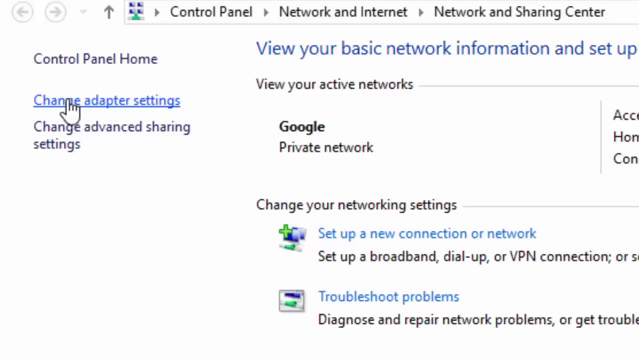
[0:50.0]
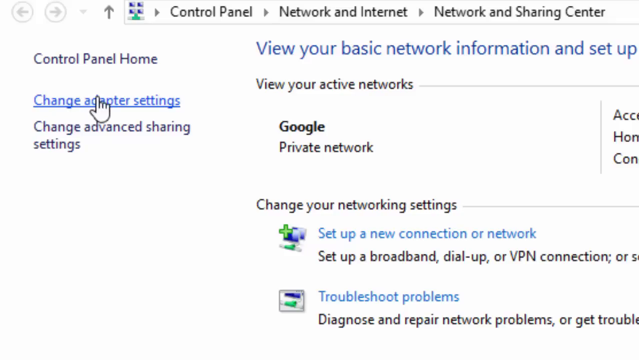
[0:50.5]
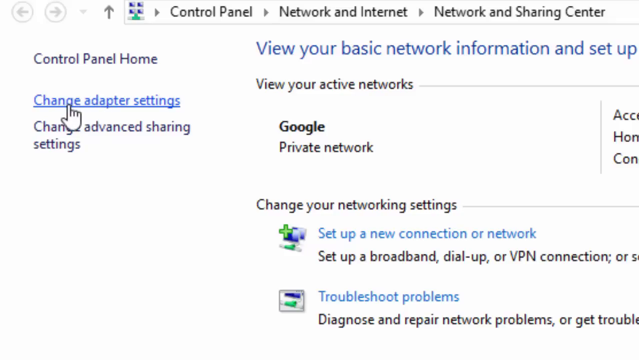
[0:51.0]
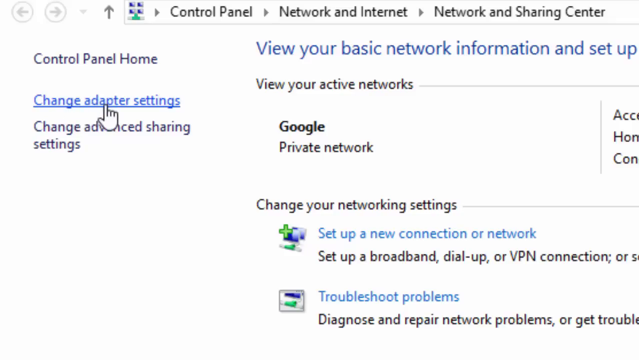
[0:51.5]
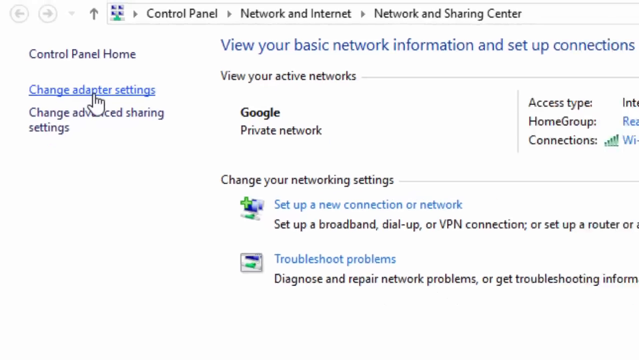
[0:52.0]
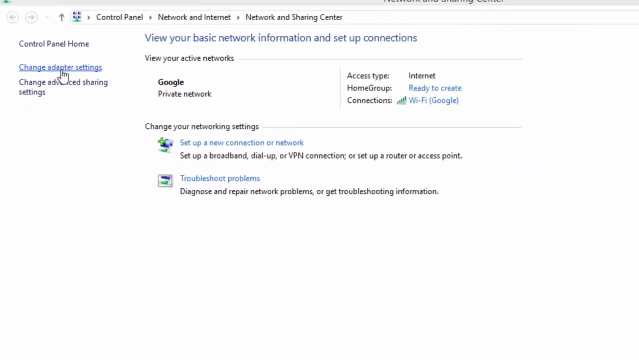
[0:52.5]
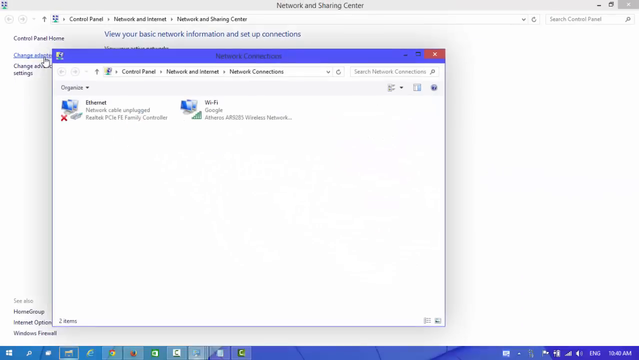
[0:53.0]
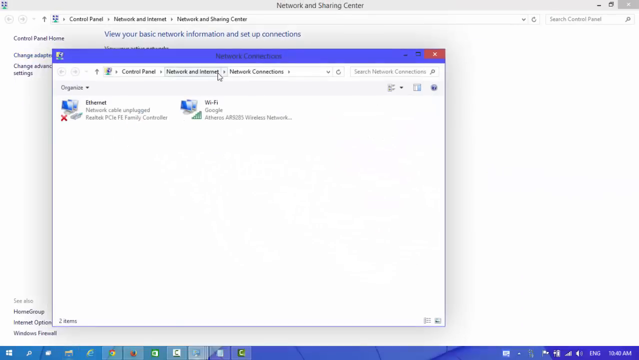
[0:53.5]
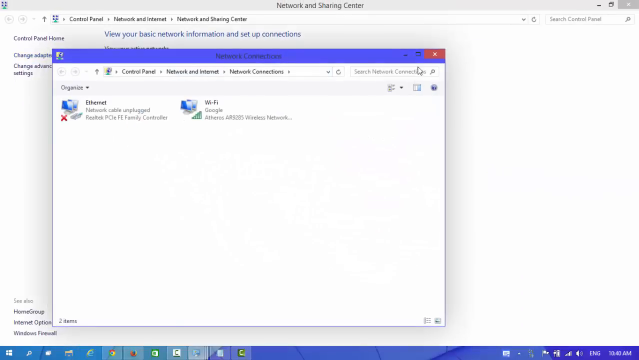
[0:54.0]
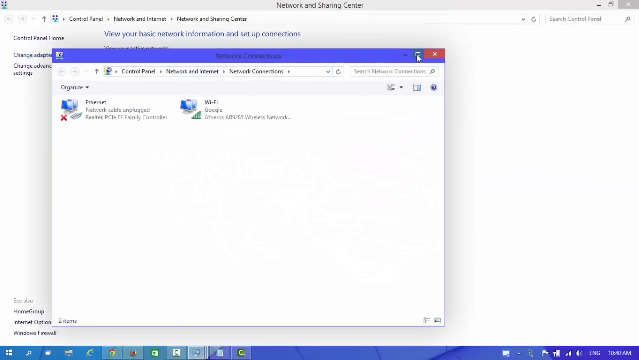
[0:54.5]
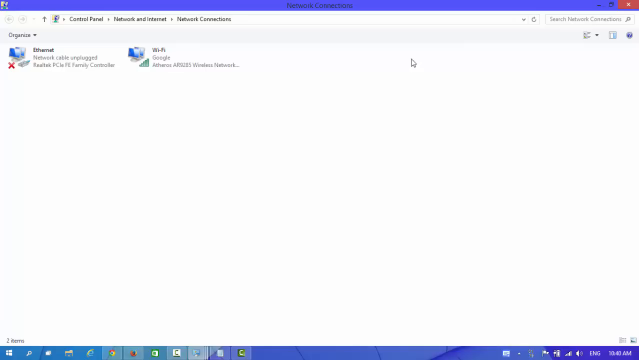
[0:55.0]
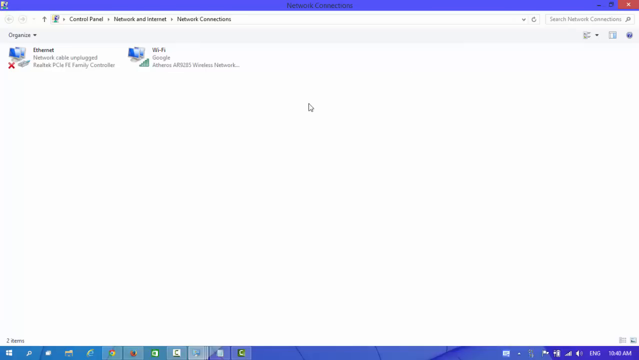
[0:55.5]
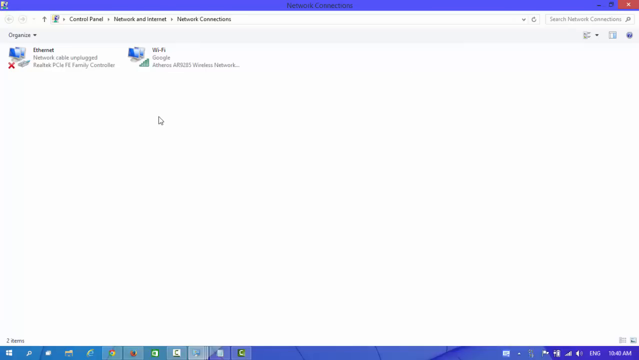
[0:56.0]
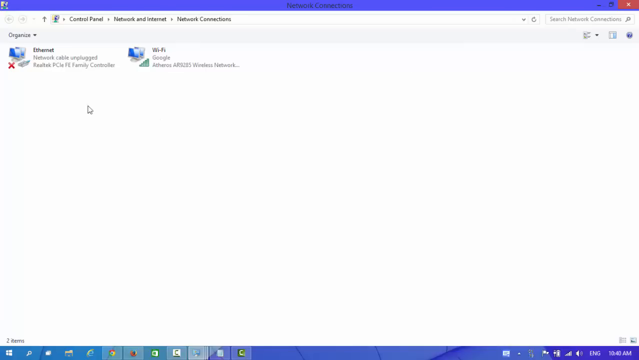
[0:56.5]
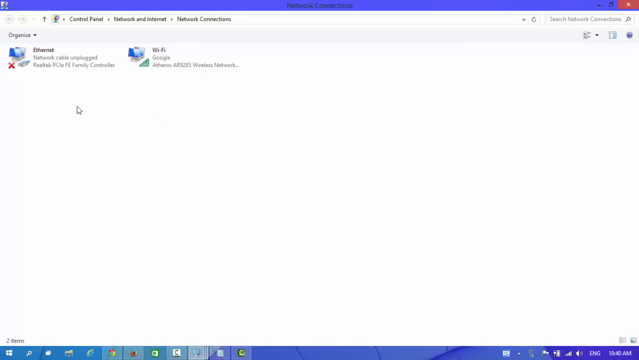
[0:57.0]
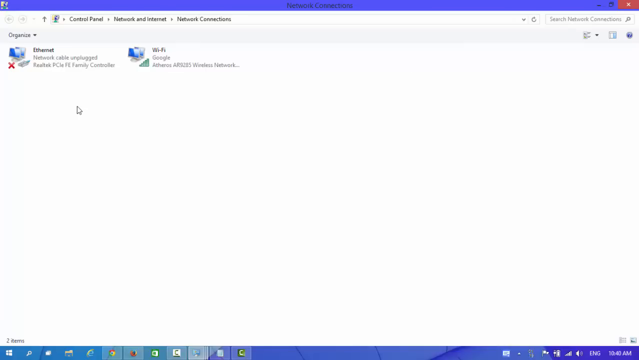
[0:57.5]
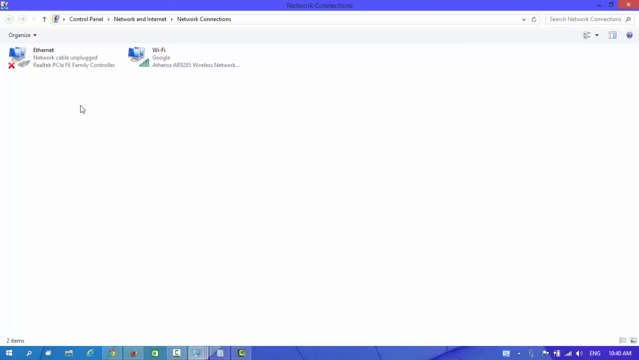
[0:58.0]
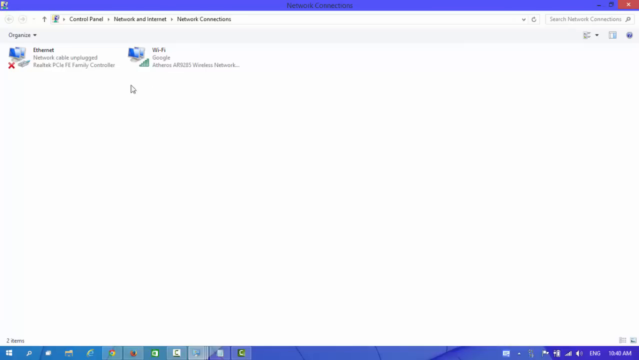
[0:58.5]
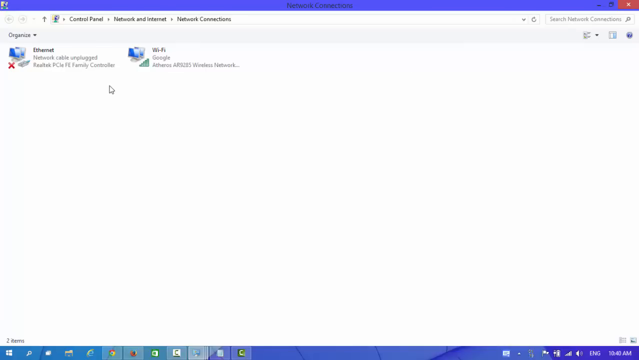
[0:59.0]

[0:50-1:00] The person clicks on Change Adapter Settings, which brings up a Windows window called Network Connections listing two connections: "Ethernet" and "Wi-Fi." Under Ethernet it says the network cable is unplugged, and under Wi-Fi it shows a full-strength Wi-Fi signal from Google. The mouse moves back and forth between the Ethernet and Wi-Fi options. The window has been maximized so it takes up the whole screen. It also shows that the Ethernet is the Realtek PCI-FE family controller and the Wi-Fi is the Atheros wireless network. The Network Connections page is in the control panel under the network and Internet section.